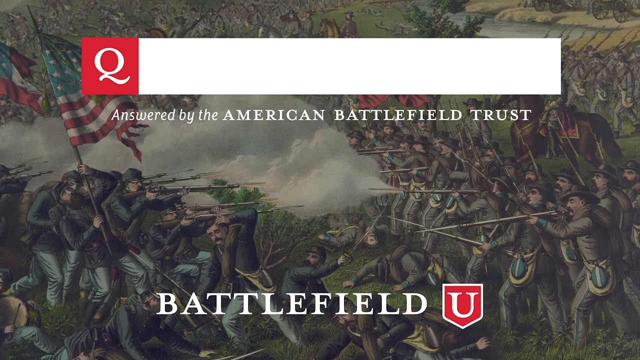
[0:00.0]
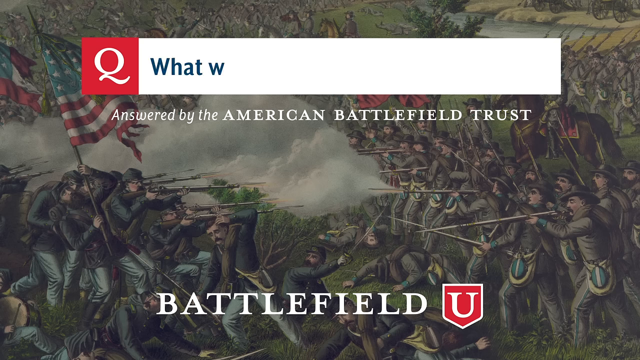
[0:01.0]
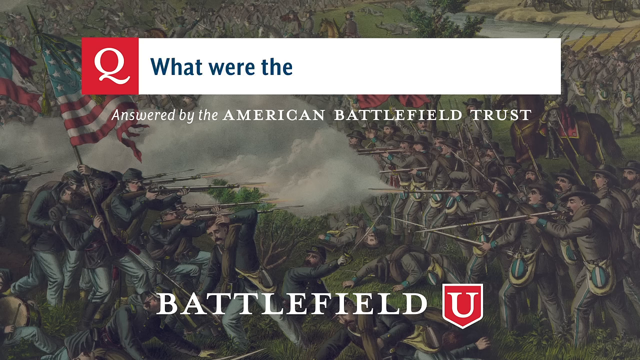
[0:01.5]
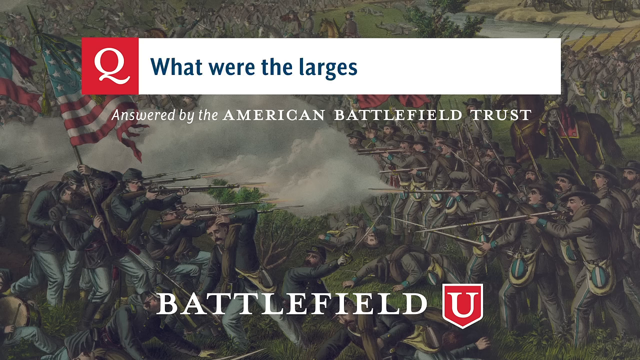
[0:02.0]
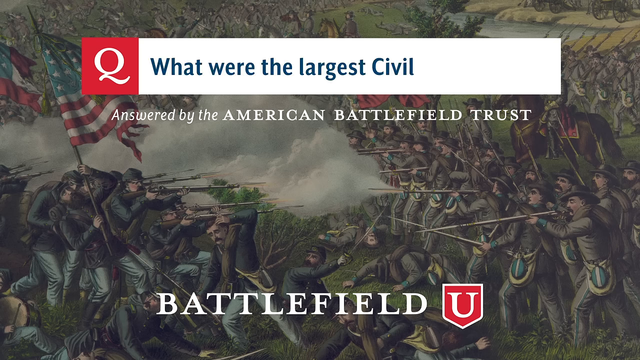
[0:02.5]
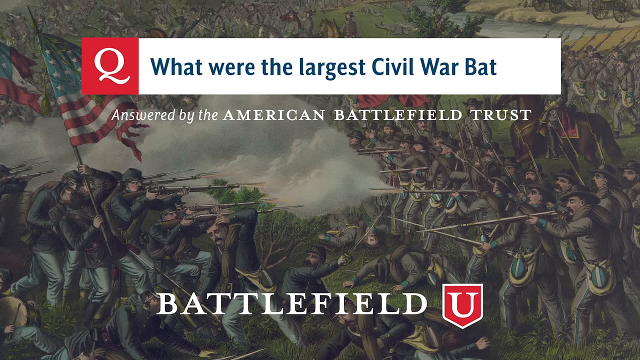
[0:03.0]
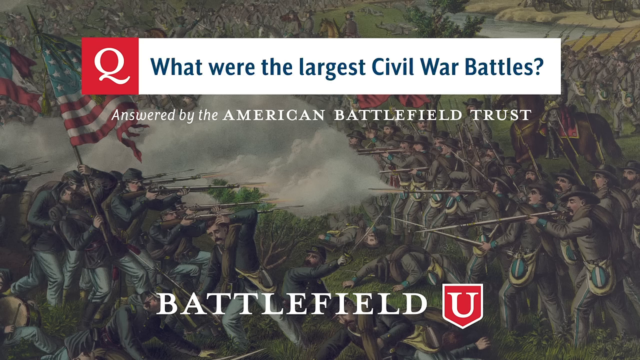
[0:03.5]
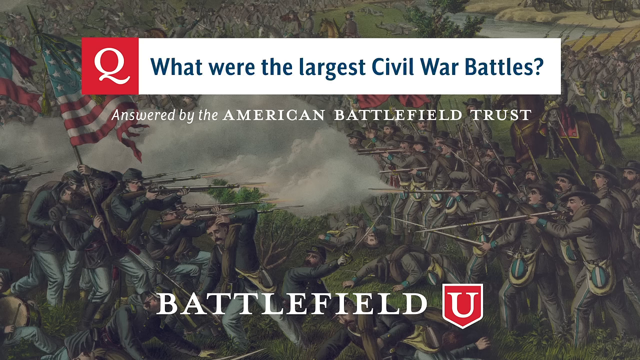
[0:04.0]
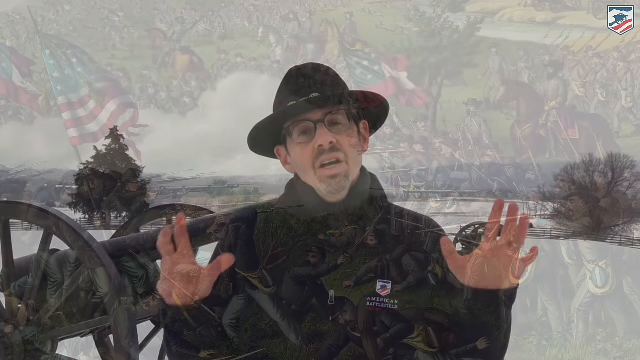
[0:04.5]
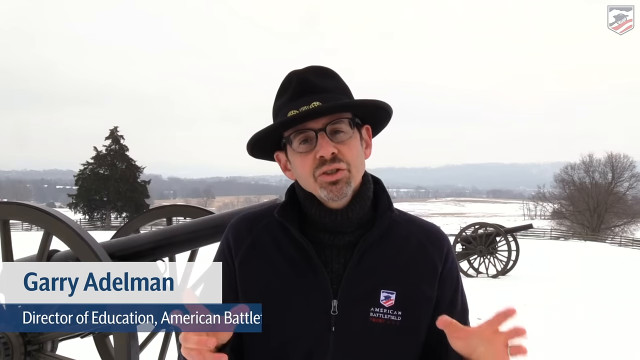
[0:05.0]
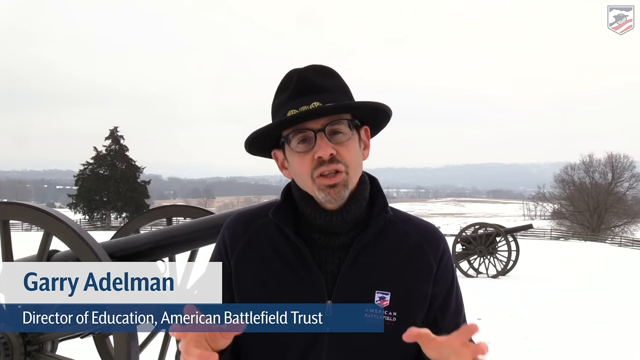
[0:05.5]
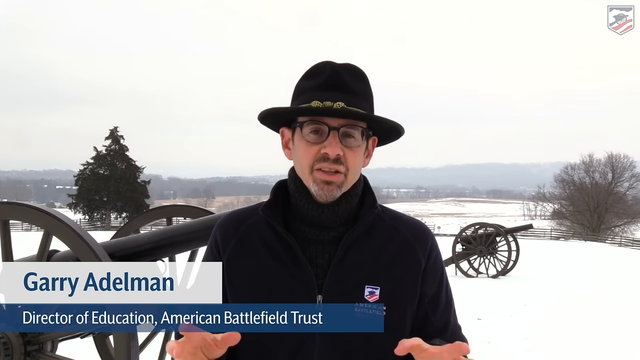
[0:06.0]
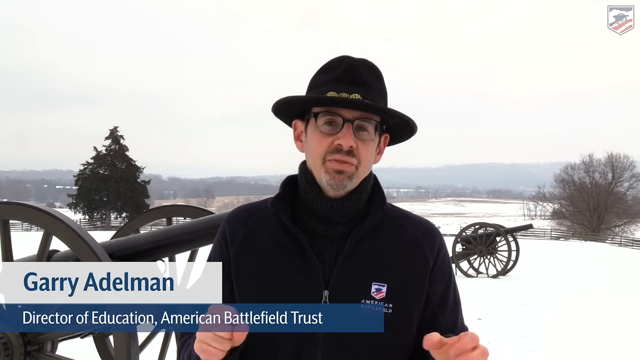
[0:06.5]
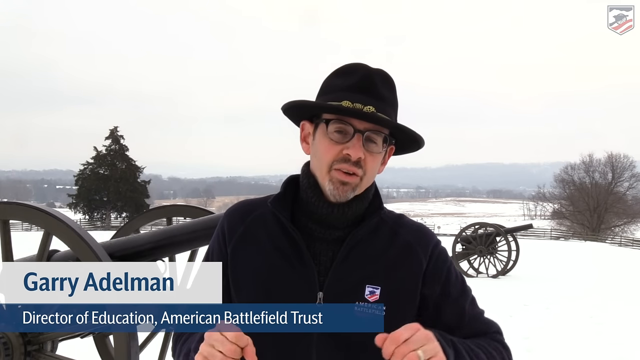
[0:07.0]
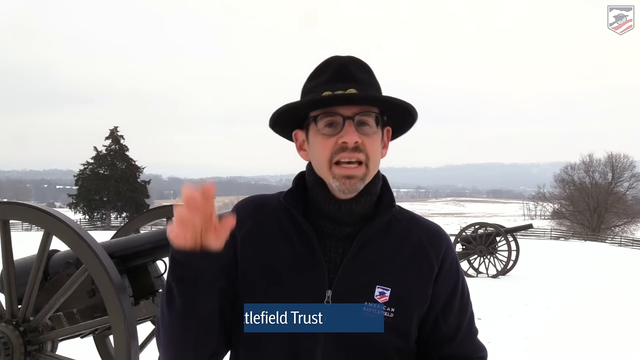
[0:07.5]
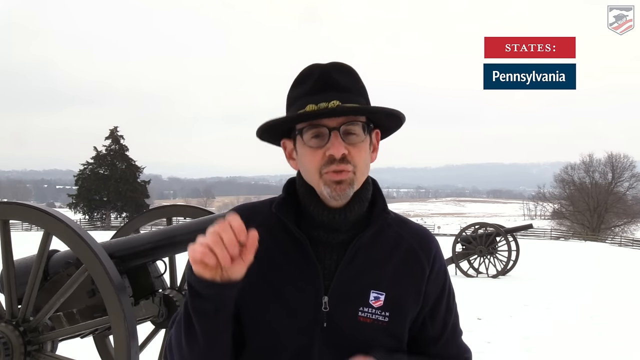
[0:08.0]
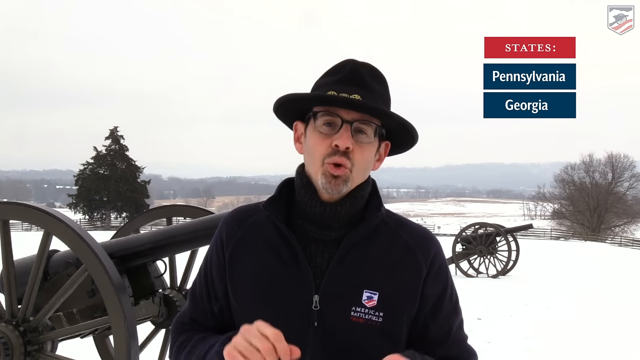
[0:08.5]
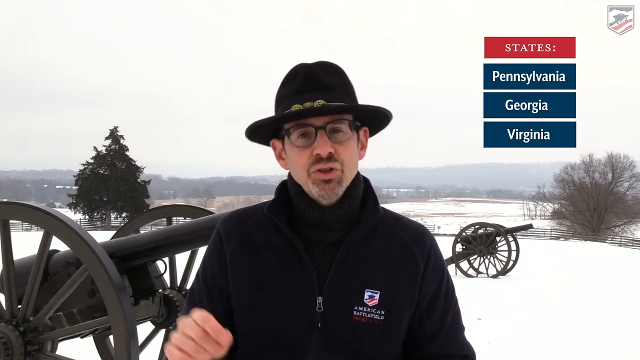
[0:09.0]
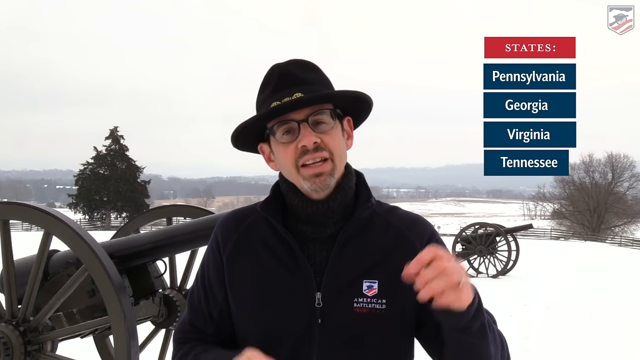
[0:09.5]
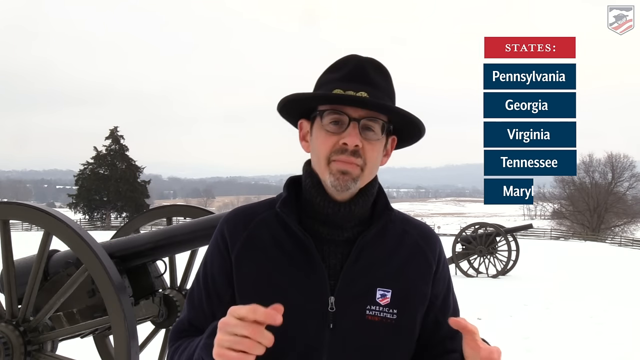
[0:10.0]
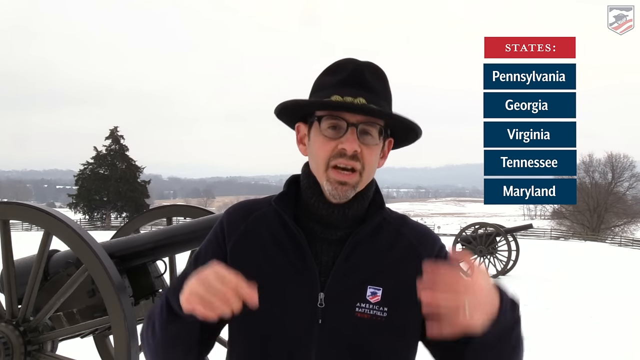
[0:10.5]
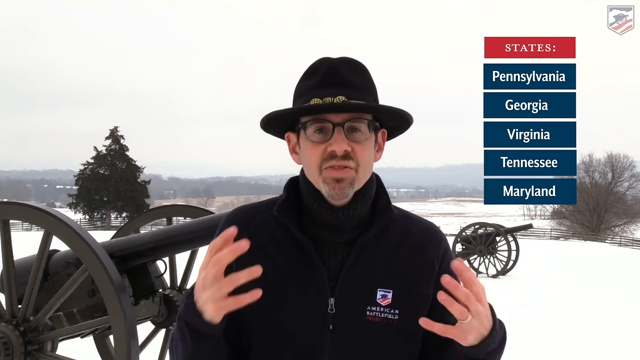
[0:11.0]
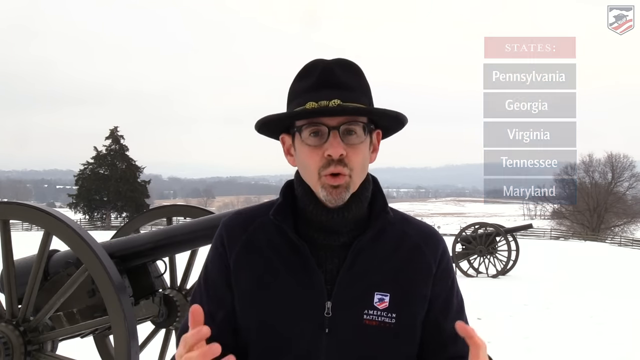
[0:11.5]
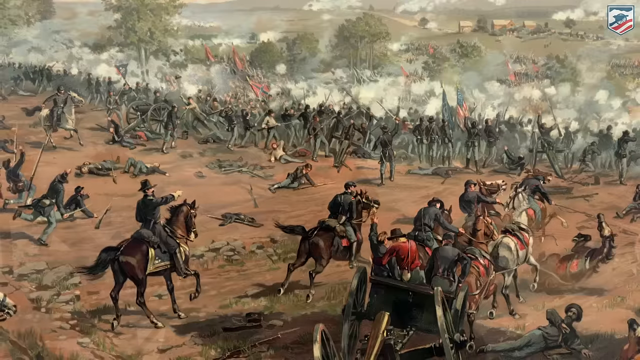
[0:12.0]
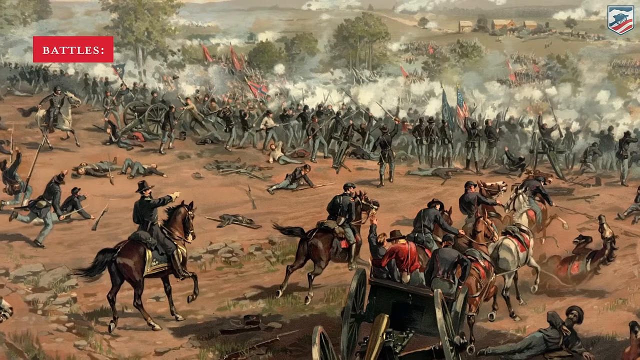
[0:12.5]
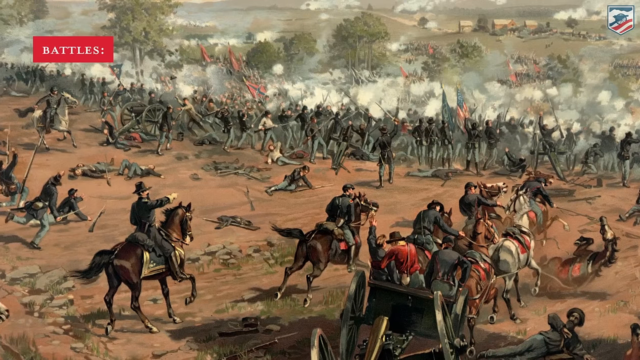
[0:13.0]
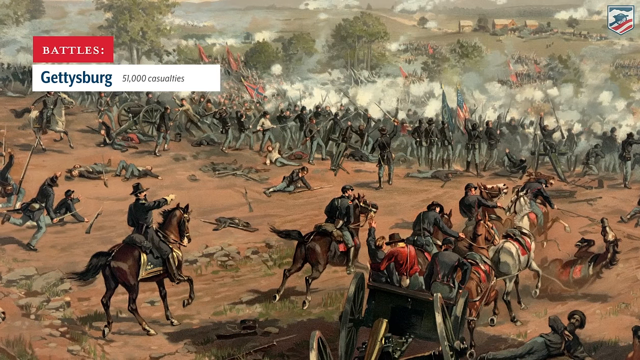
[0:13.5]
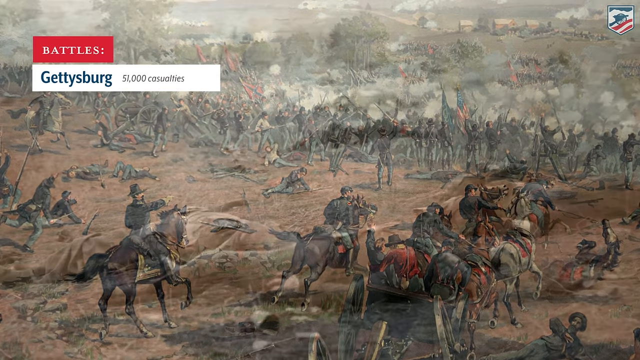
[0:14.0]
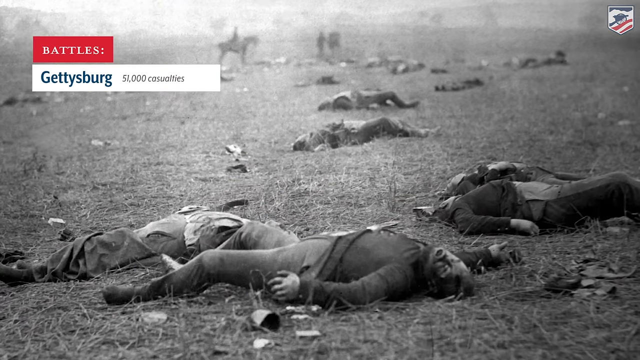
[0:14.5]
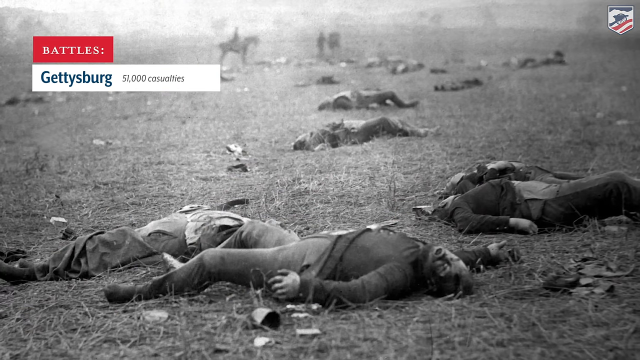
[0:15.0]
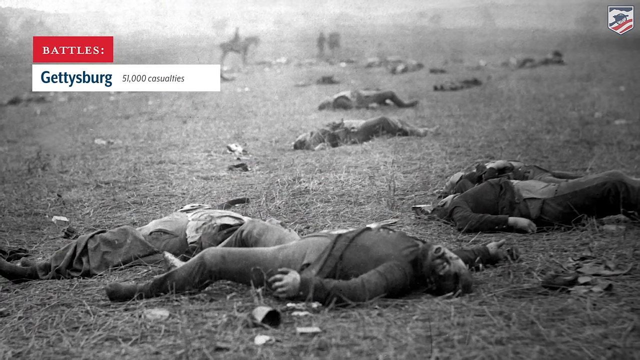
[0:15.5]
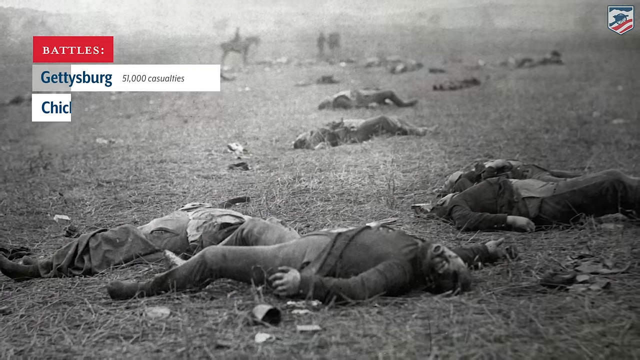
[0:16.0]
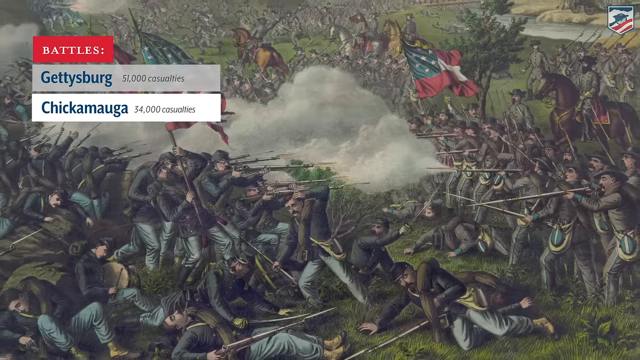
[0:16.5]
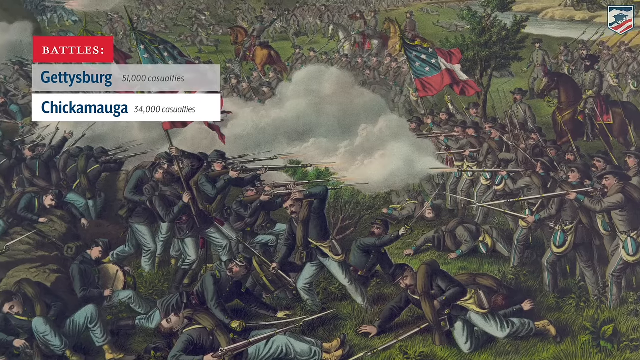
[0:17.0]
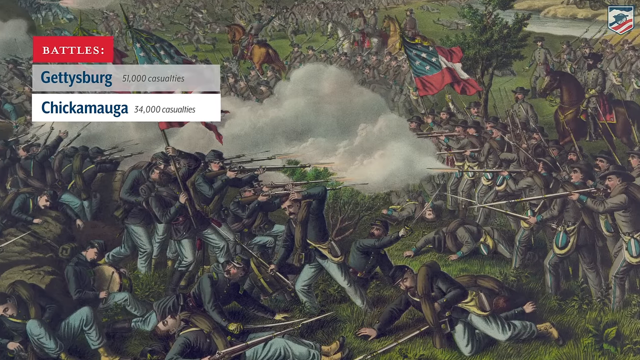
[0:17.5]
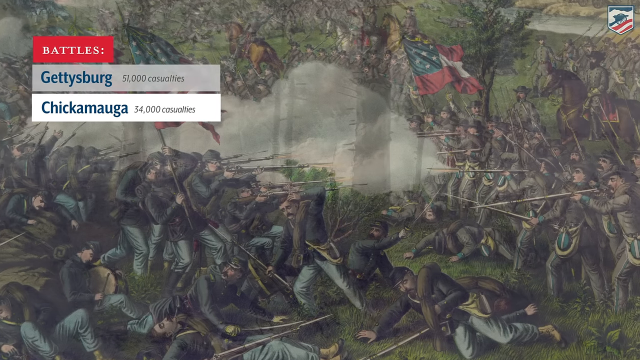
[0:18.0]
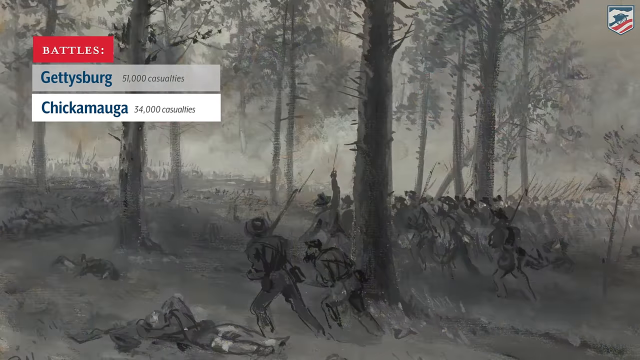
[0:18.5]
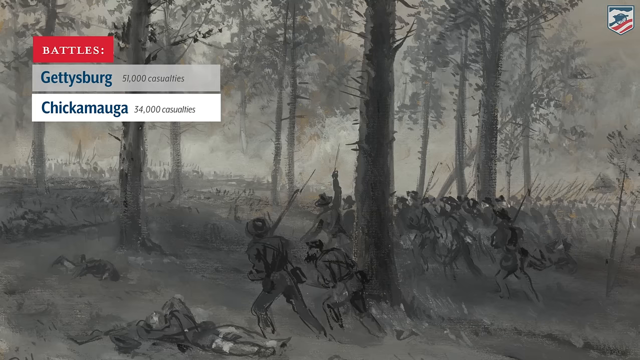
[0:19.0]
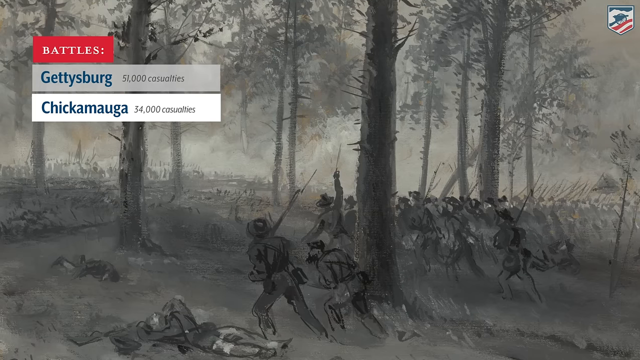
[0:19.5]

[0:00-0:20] The video opens with a background clip that seems meant to represent the Civil War to a degree. A "Q" appears, apparently standing for QR, along with something like a search bar. Underneath, text reads "Answered by the American Battlefield Trust." At the bottom it says "Battlefield," and there is what looks like a shield with the letter U in the middle on a red backdrop. Civil War figures are on both sides: a group holding up a flag on the left and, apparently, Confederates on the right. Next comes a picture of Gary Adelman, identified as the Director of Education, American Battlefield Trust. He wears what looks like some type of ranger hat, glasses, a small beard that is more like a goatee, and apparently a heavy jacket. He is talking, and it looks like he is possibly at Gettysburg. "Gettysburg" appears among the battles, which are shown one after another on the left-hand side.